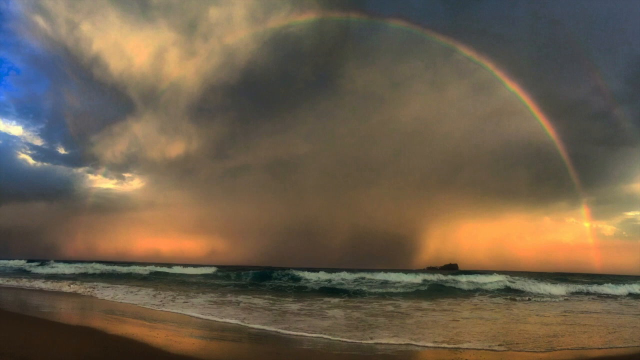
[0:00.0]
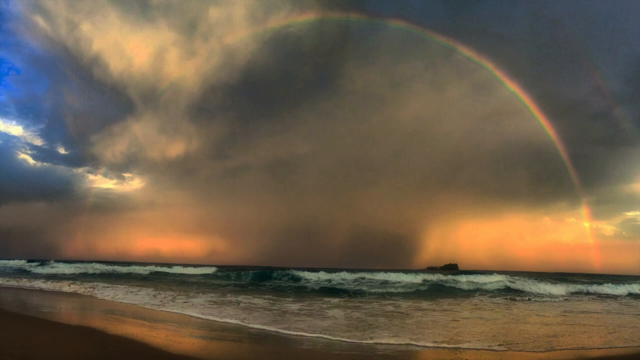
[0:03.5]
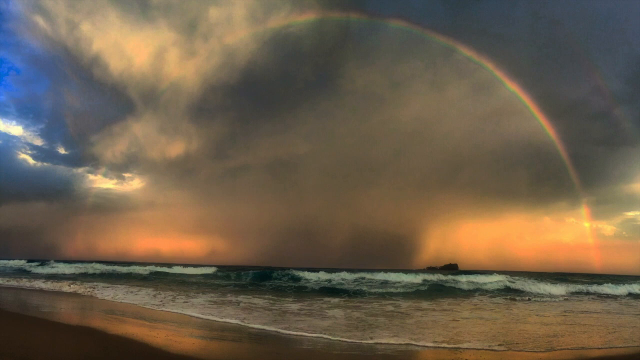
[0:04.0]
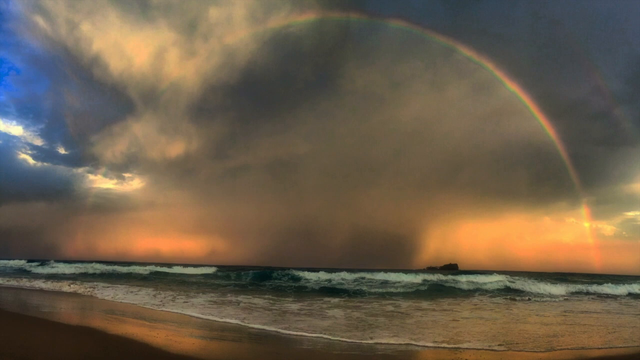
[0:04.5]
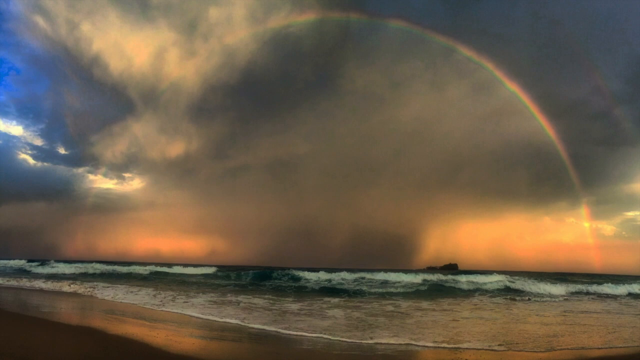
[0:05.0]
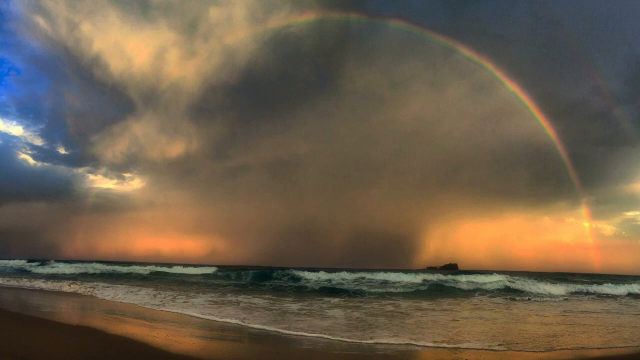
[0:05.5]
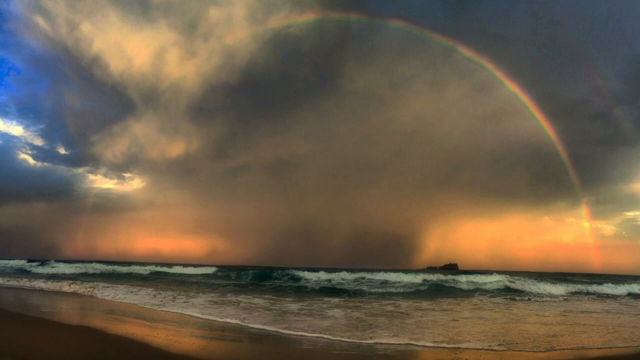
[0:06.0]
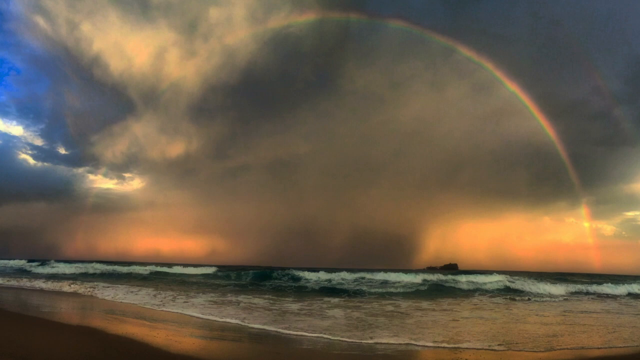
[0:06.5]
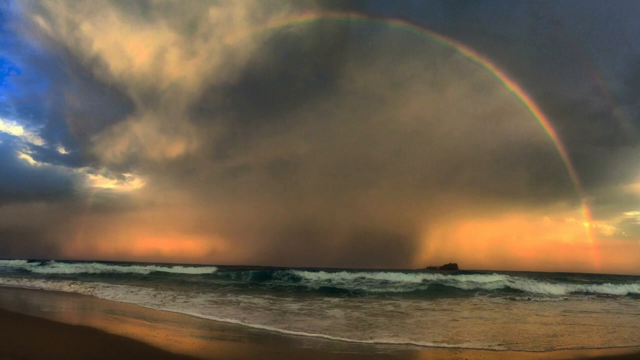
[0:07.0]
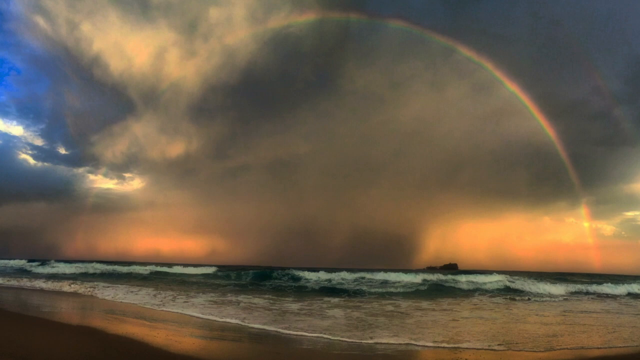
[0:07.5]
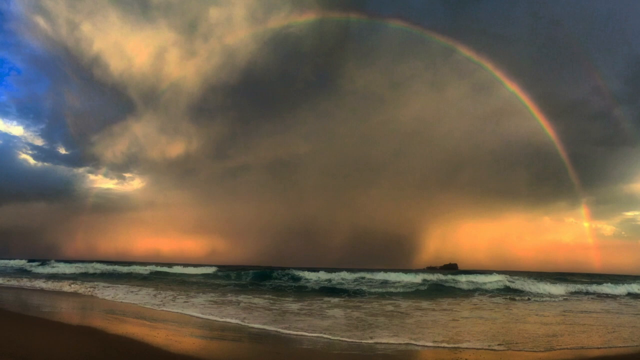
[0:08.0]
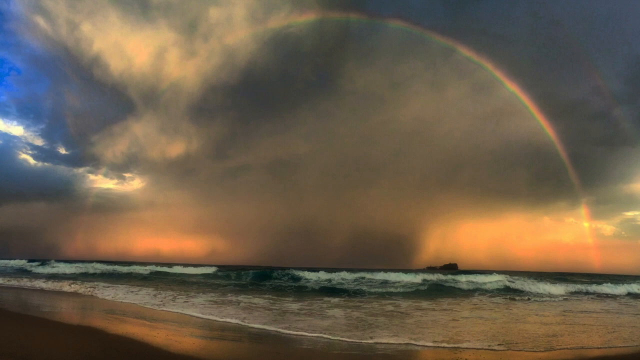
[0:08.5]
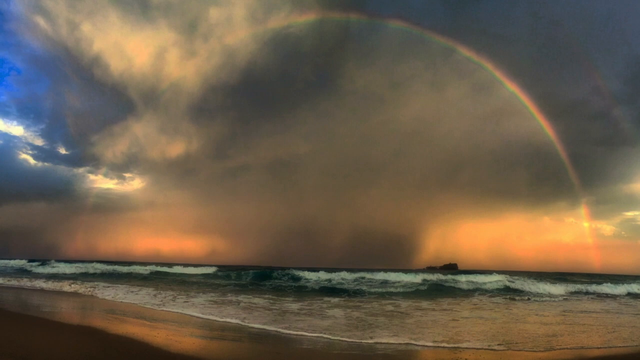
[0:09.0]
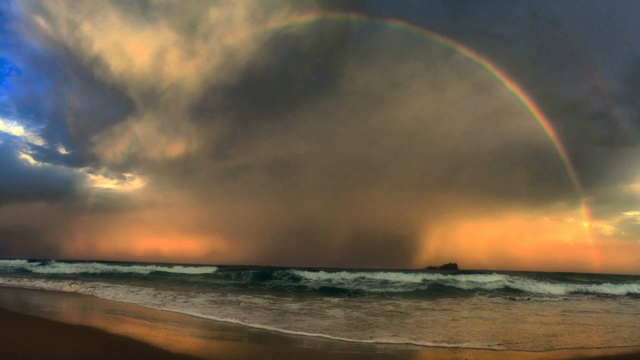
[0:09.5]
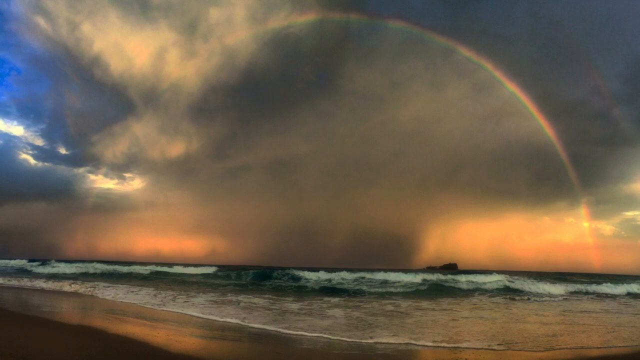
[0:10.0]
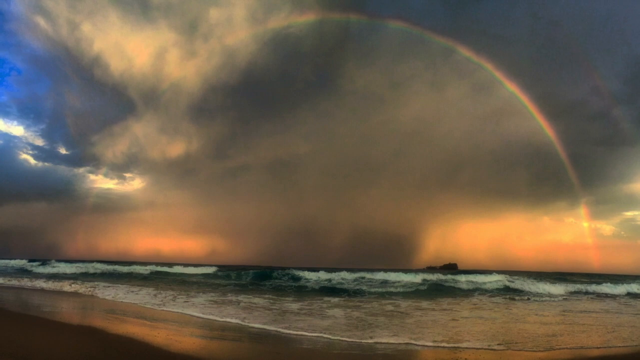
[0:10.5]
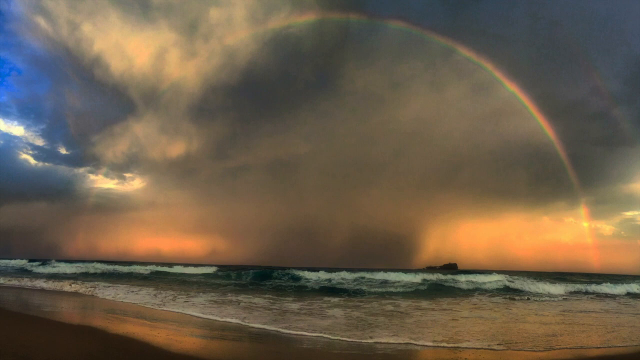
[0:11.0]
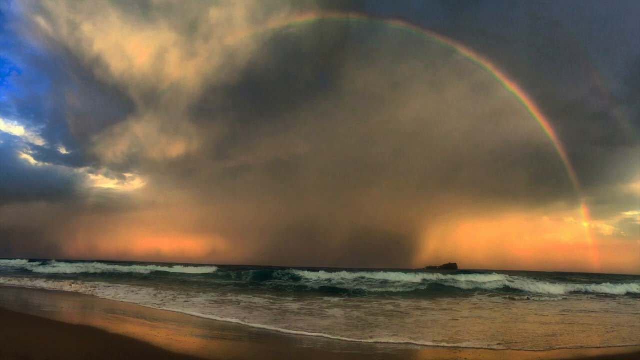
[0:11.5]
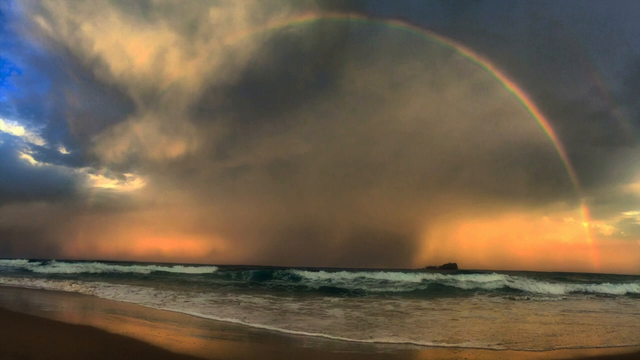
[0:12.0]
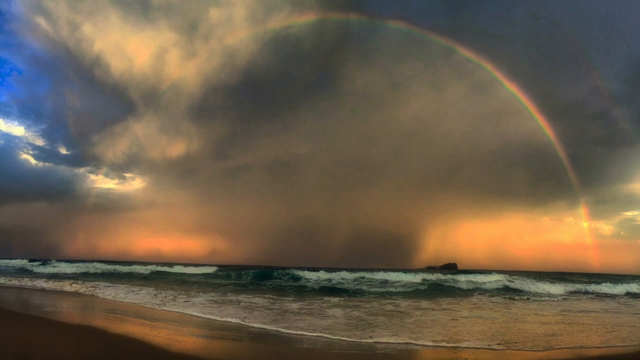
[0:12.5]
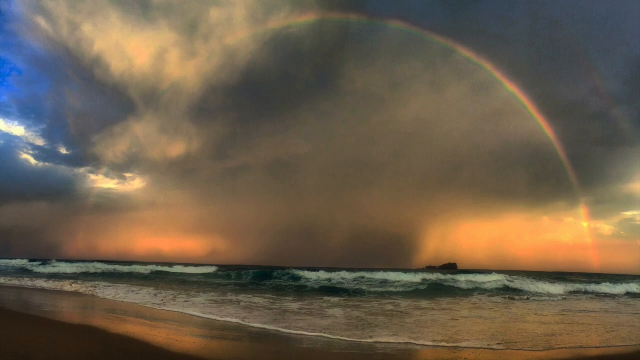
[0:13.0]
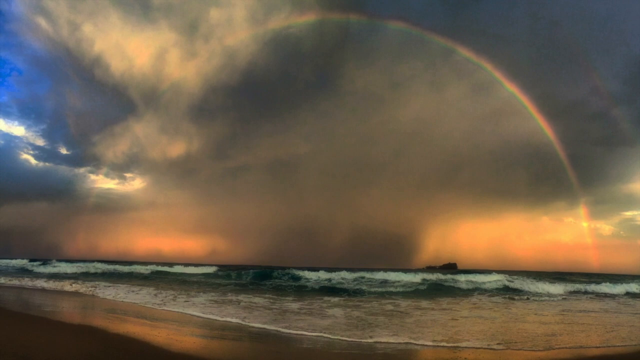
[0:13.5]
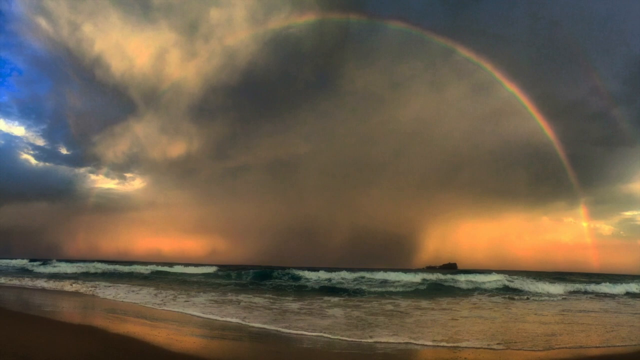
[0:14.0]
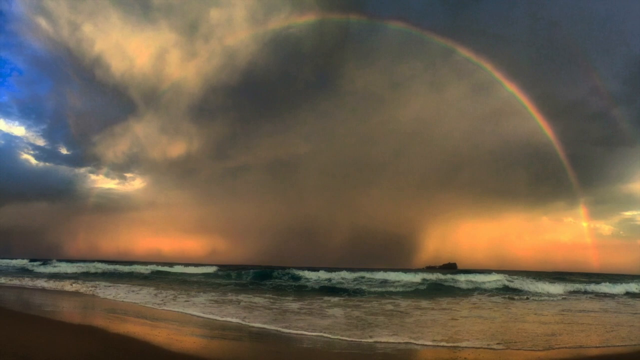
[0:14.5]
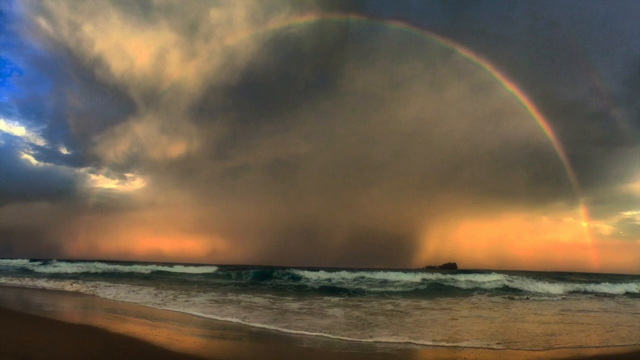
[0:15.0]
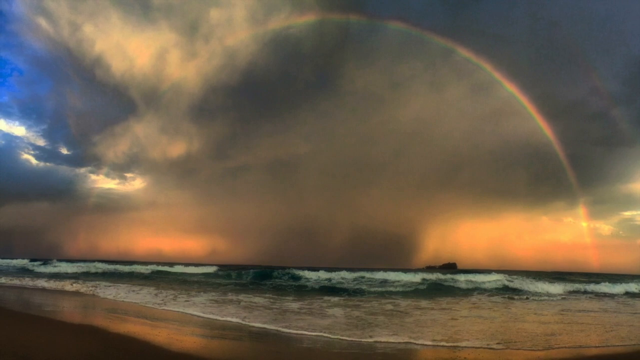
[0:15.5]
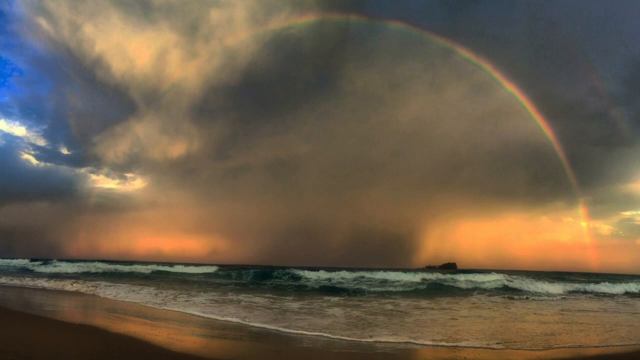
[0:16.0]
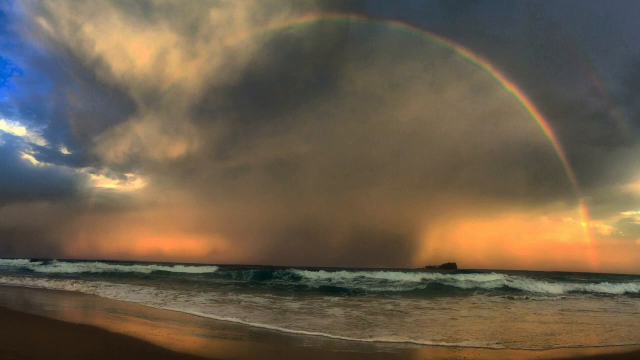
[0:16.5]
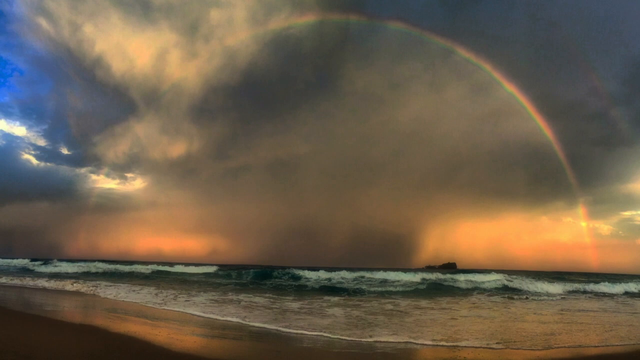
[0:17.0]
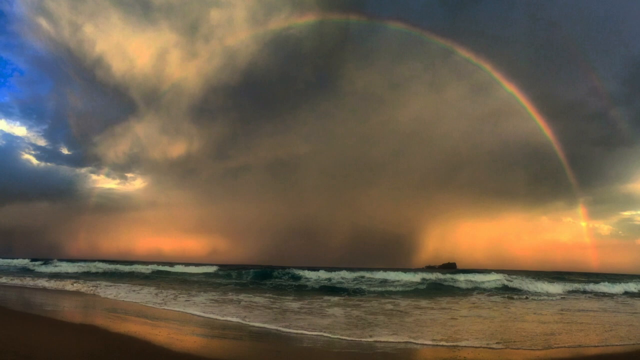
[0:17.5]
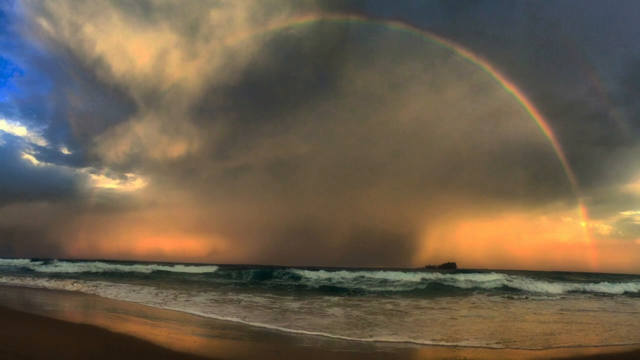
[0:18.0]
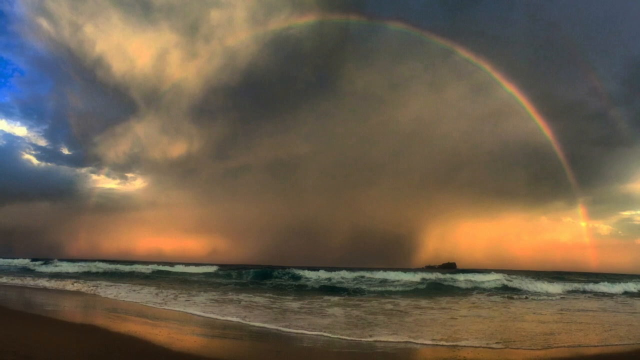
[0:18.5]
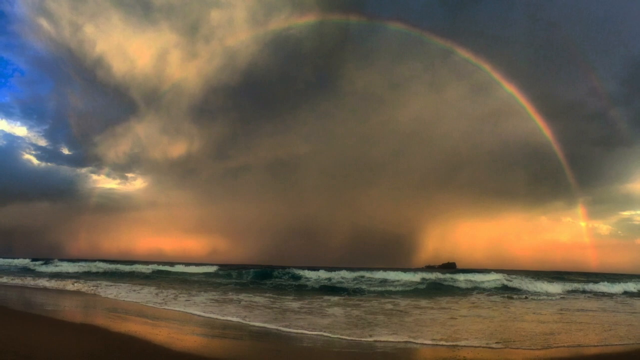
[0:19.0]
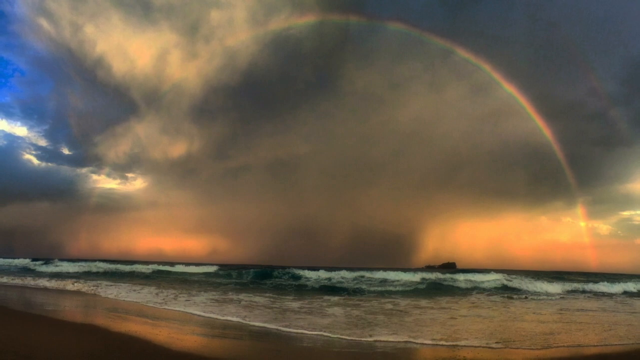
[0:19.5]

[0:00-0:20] In the foreground is a sandy beach. The sand in the lower left-hand corner is dark; beyond that it is lighter and reflects the sky, showing gold and gray. The tide is coming in, with an area of fairly shallow water rushing onto the sand. Beyond that, a wave is beginning to break: on the far left and far right of the screen there is white foam where it has curled over, while in the center the wave has not yet broken. Further out on the right, a small island of some sort is silhouetted. In the center of the frame, a large, dark gray water spout rises into the sky, looking like a wide tornado over the ocean. On either side of it, low on the horizon, the sky is orange, red and pale green. The water spout extends about a third of the way up and then widens at the top into clouds, gray in the center and lighter in the upper left-hand corner. On the far left there is some blue sky, with white backlit clouds beyond it, and on the lower right more white and gold clouds are visible. The sun backlights the water spout, and in front of it a rainbow forms a perfect arc. Its red and green are clearly visible, with some yellow in the center. Clouds from the water spout extend over and obscure parts of it on the left, but the rainbow reaches from horizon to horizon across the picture.